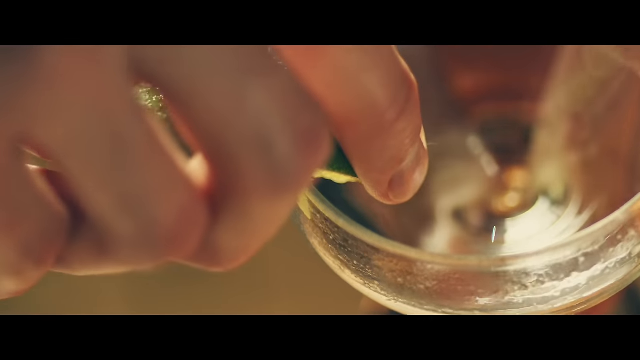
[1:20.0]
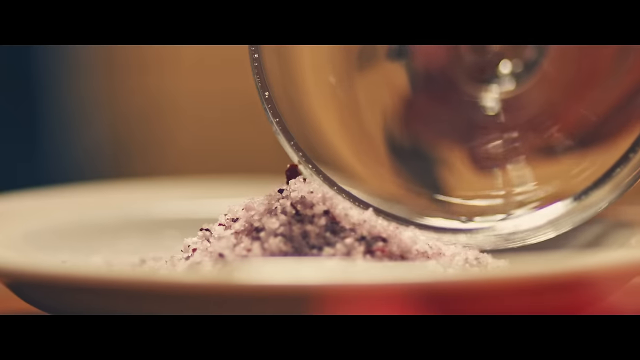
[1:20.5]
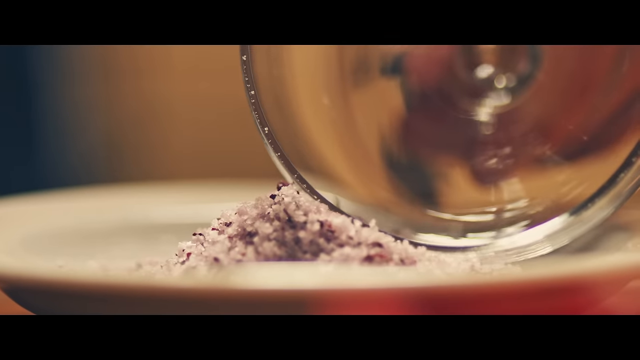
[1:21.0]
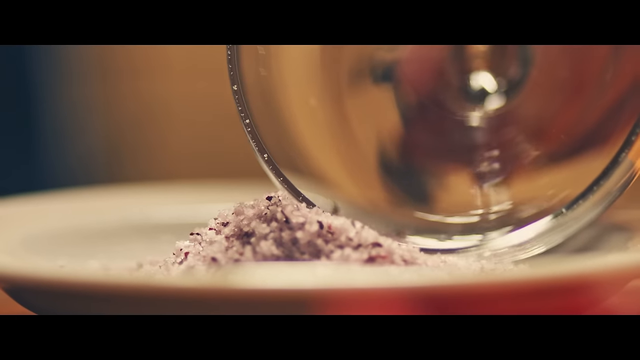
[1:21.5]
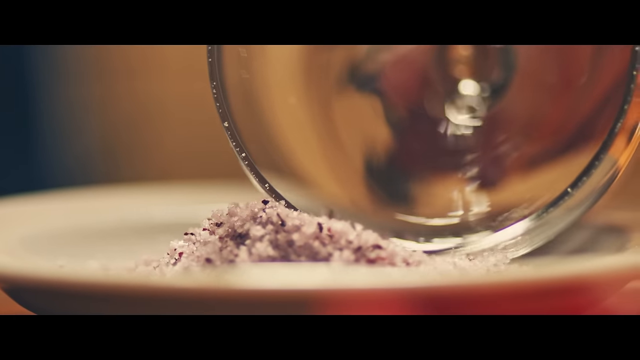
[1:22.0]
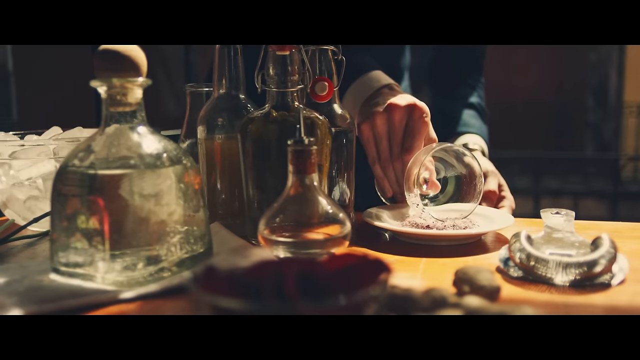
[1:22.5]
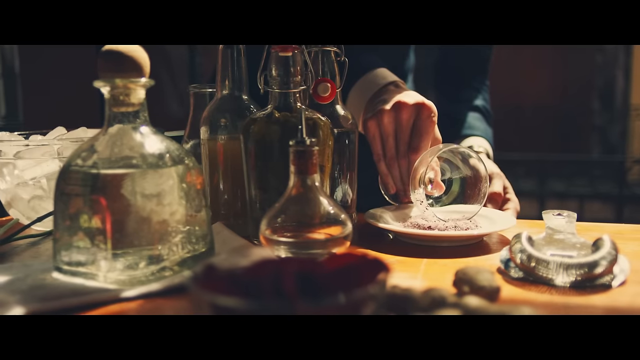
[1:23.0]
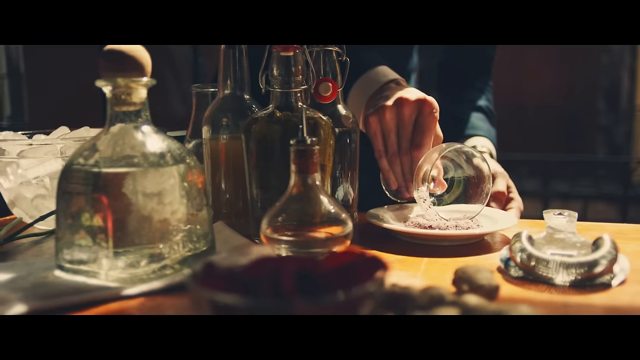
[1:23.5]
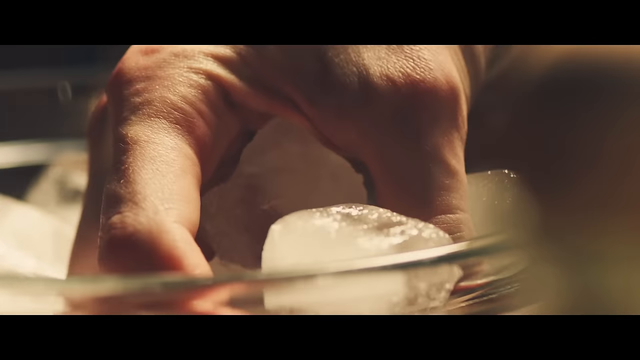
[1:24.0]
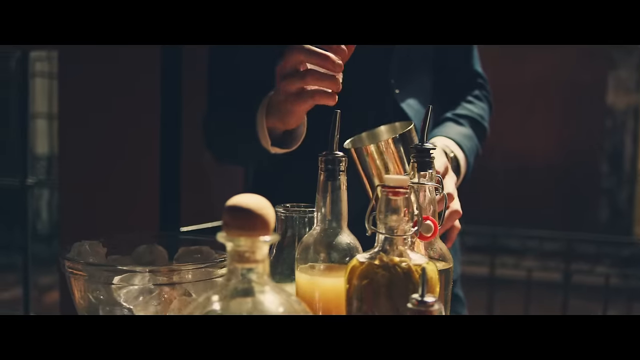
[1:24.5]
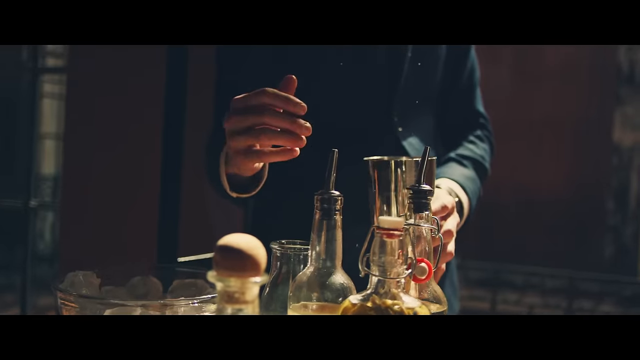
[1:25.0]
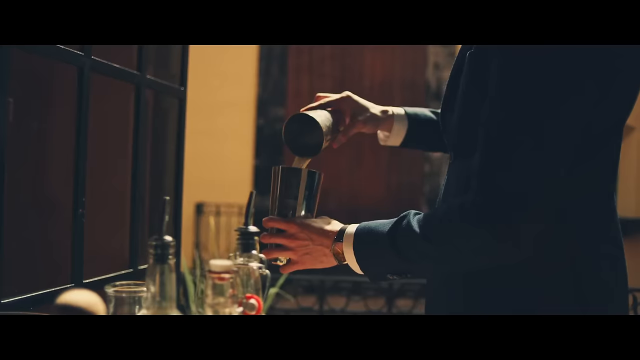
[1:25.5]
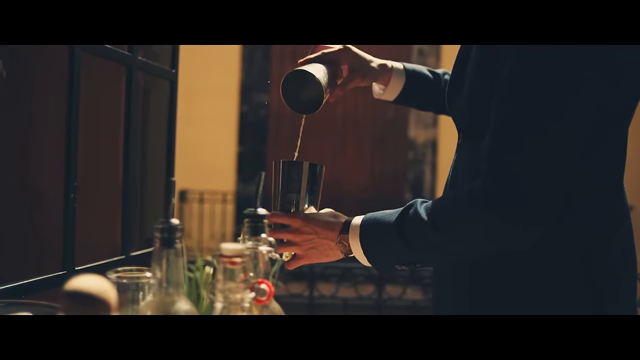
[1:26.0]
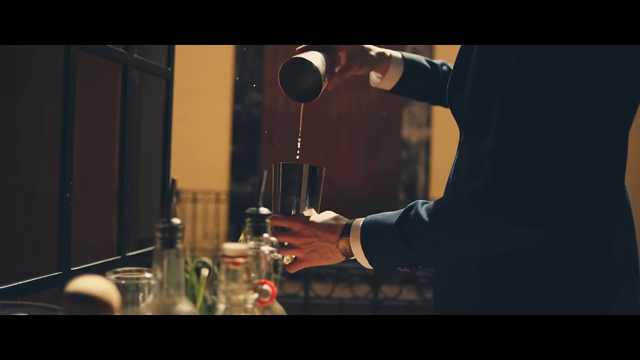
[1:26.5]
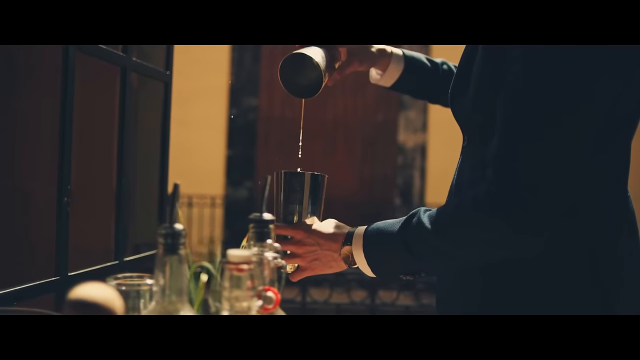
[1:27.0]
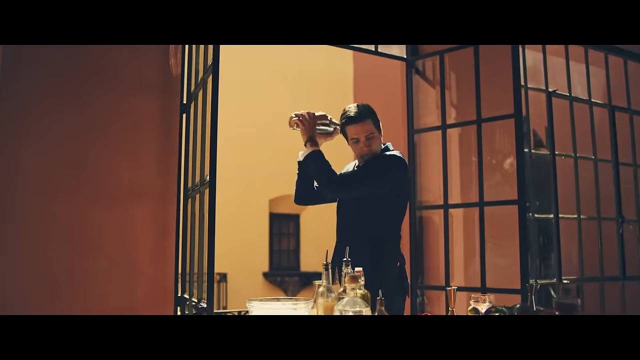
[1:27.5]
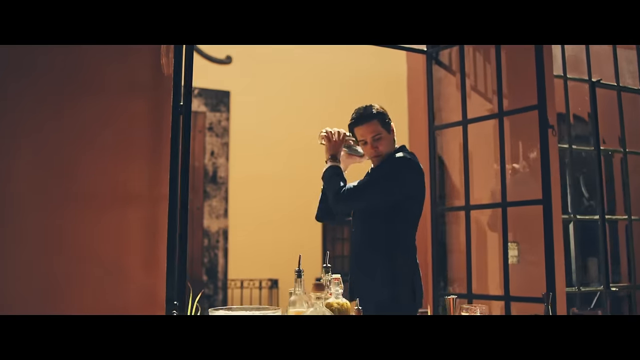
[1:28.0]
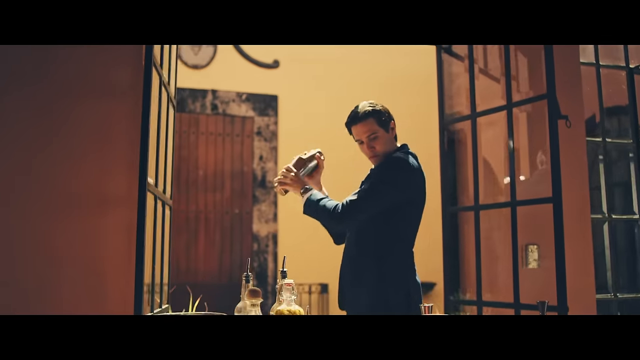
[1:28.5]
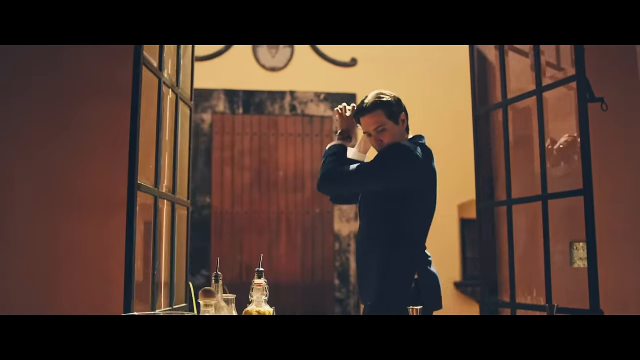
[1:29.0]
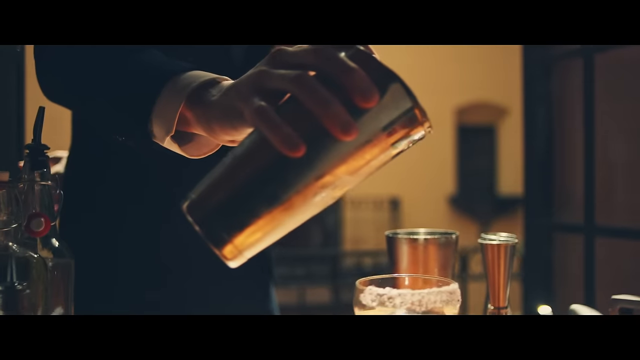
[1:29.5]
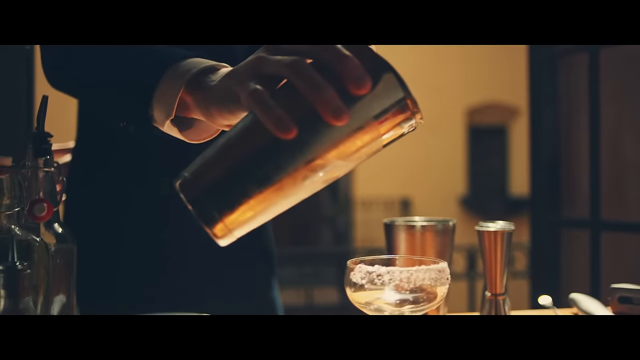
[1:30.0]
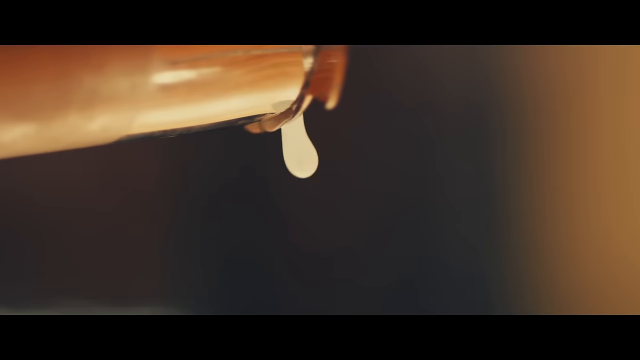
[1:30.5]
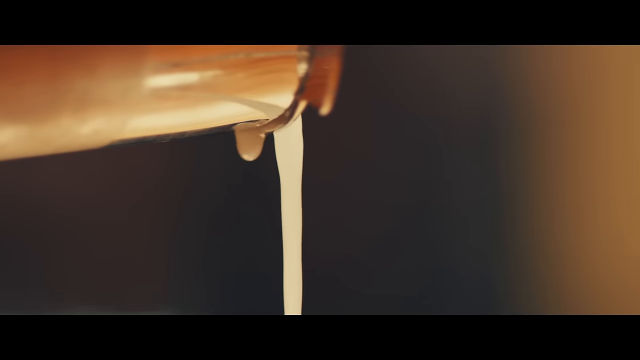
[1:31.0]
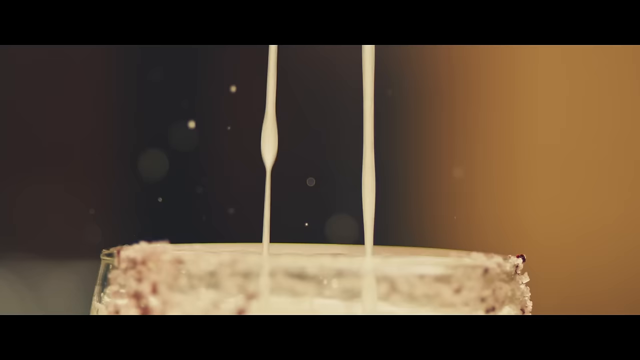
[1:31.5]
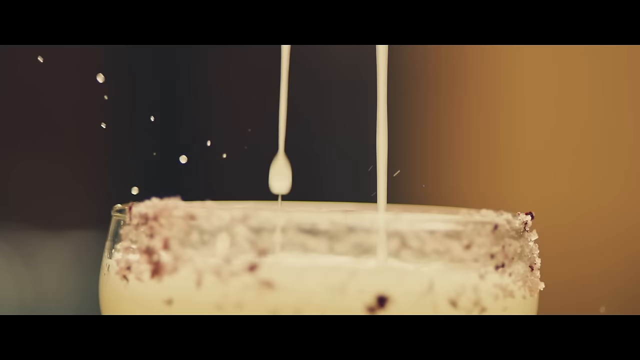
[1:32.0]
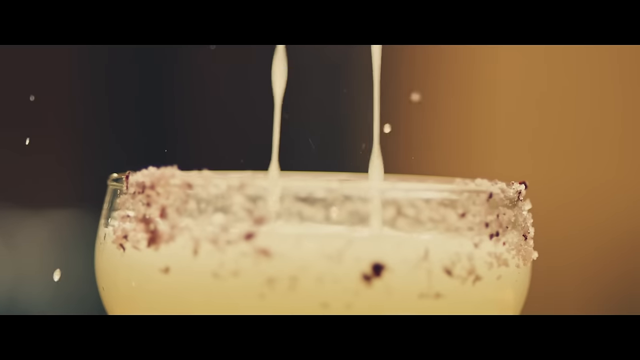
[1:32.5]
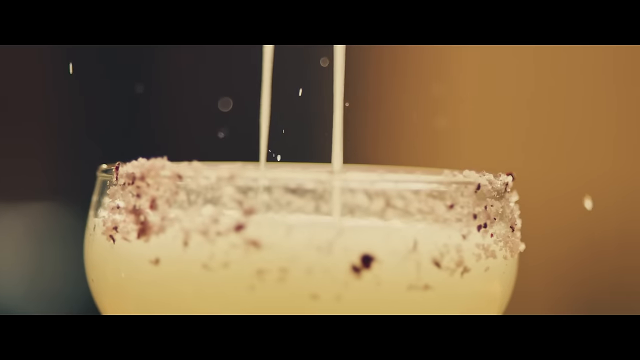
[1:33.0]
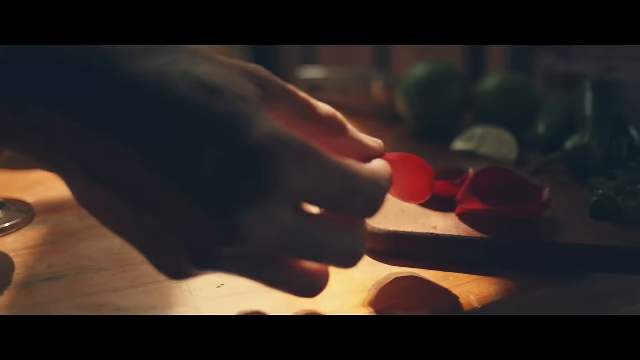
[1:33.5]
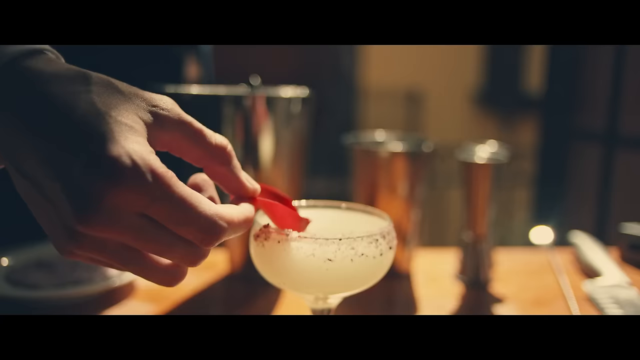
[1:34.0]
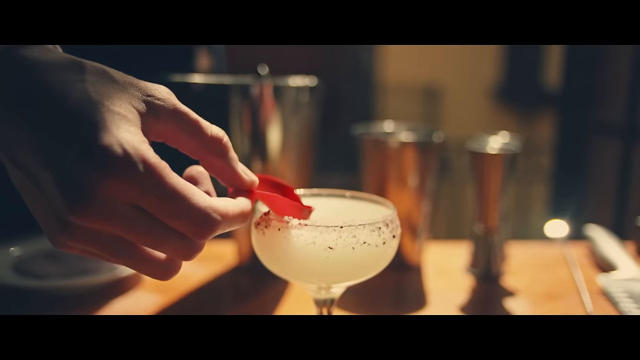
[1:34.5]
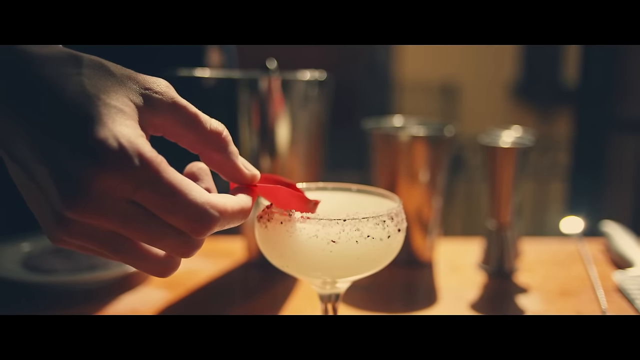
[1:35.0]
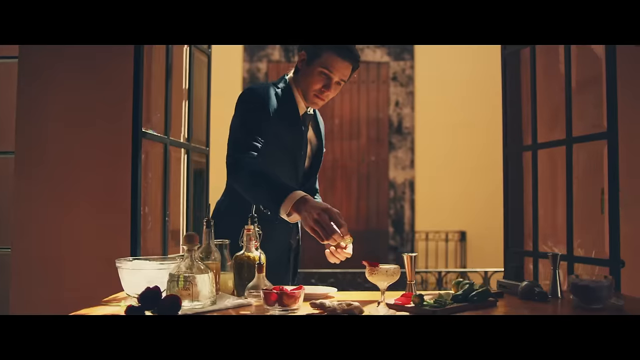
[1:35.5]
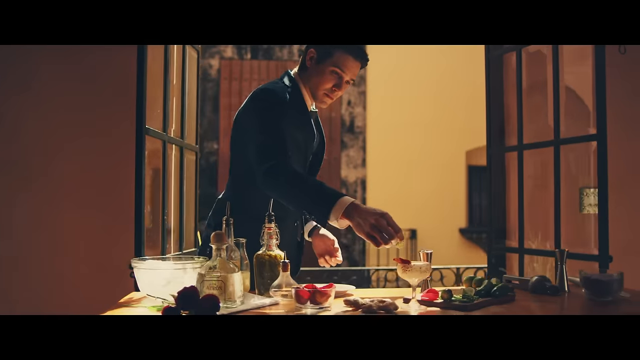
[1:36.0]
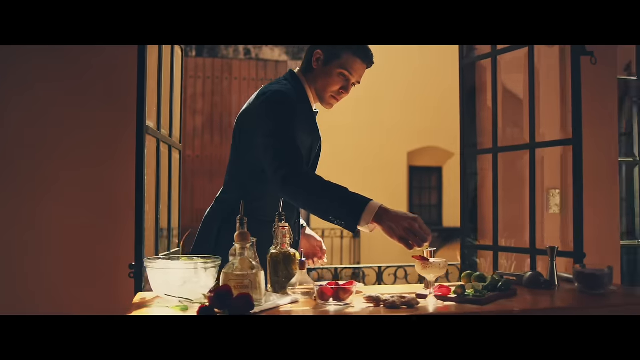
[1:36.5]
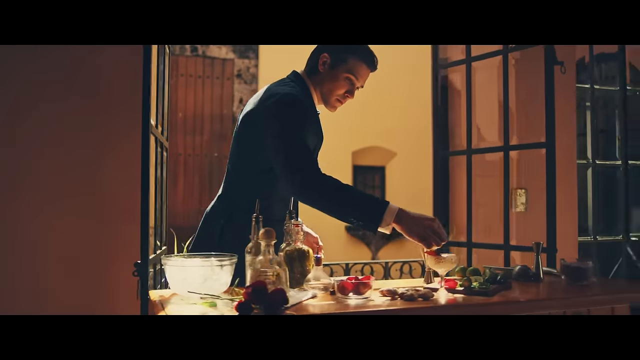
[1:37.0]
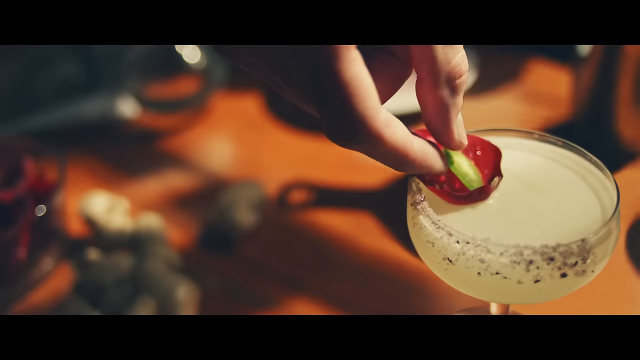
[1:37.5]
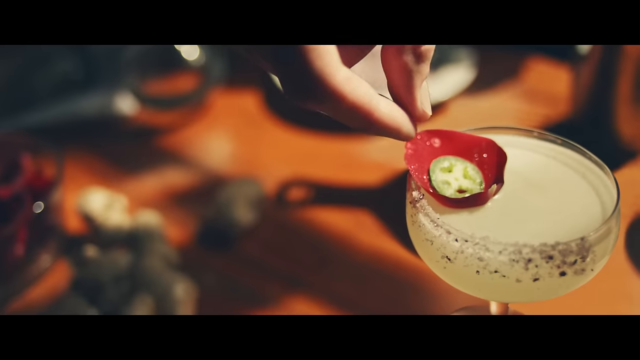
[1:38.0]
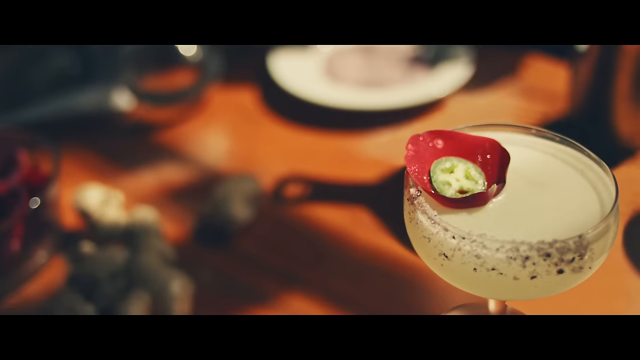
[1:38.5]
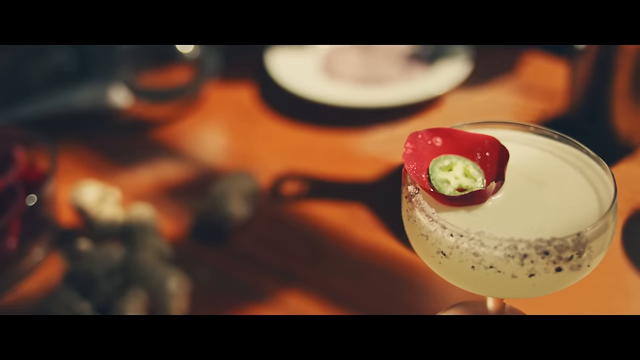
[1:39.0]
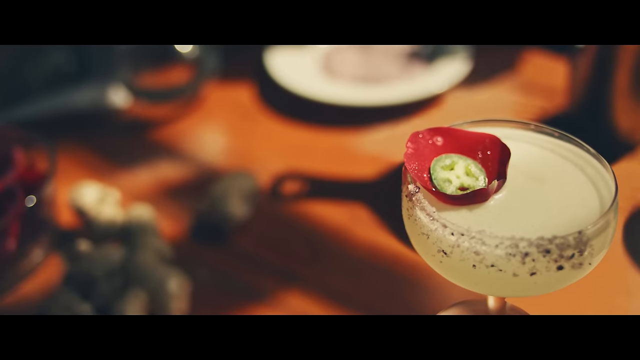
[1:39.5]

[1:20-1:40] The man rolls the rim of the glass in crushed salt, which sticks to the glass because of the lime he outlined the rim with. He then puts a rose petal on top of the drink, with a floating piece of pepper. He is quite detailed in how he pours things and prepares the glass.